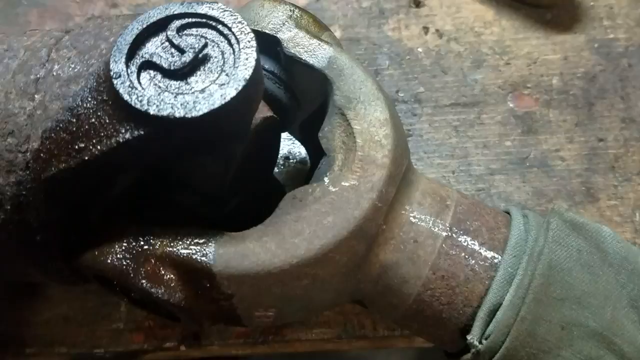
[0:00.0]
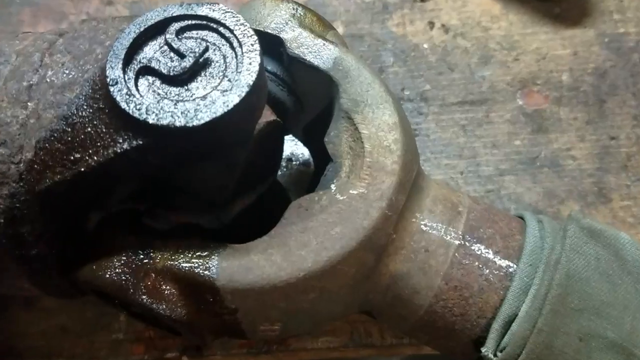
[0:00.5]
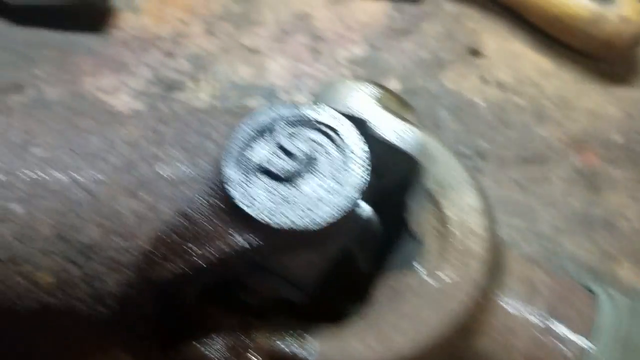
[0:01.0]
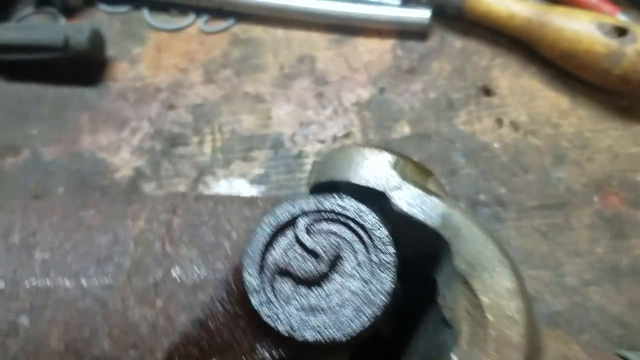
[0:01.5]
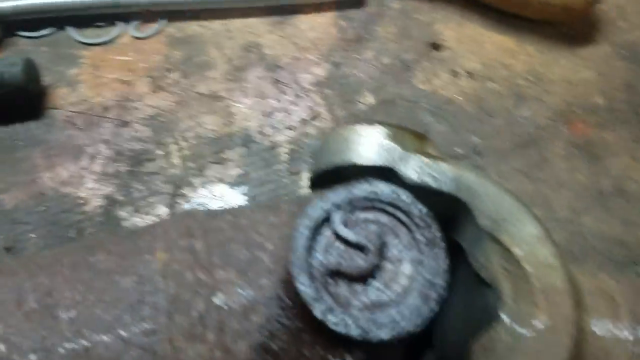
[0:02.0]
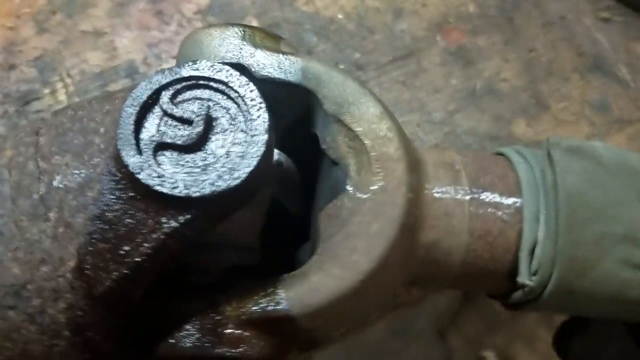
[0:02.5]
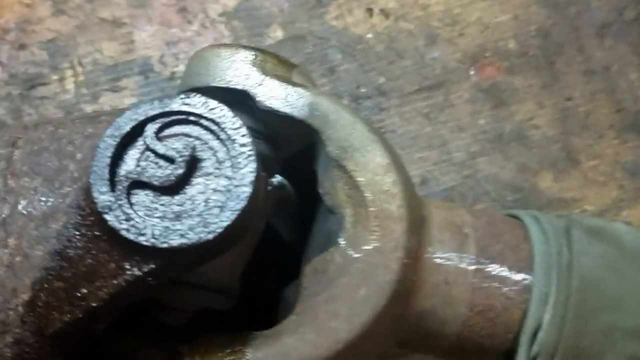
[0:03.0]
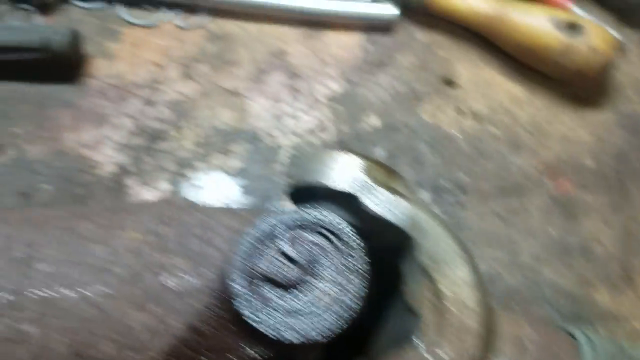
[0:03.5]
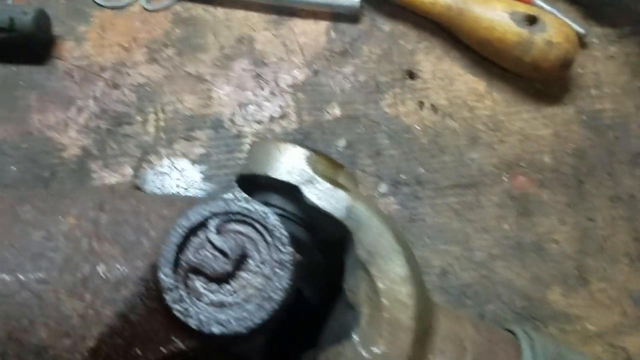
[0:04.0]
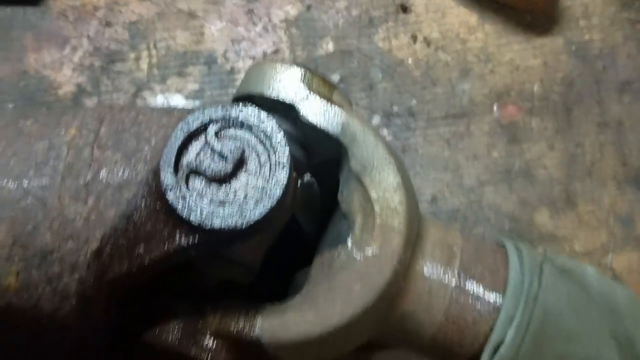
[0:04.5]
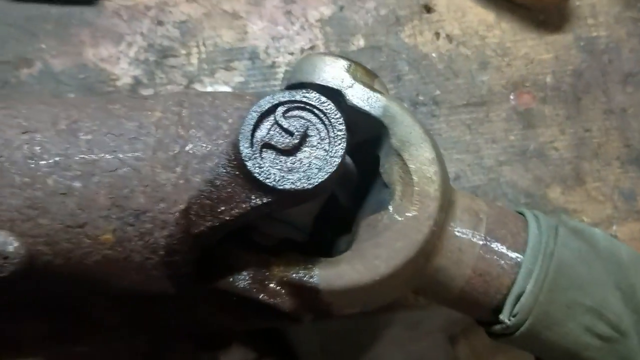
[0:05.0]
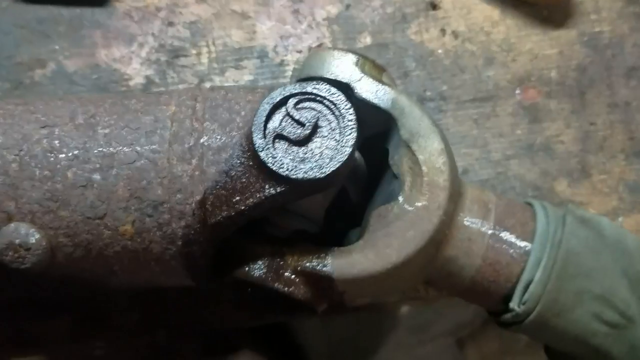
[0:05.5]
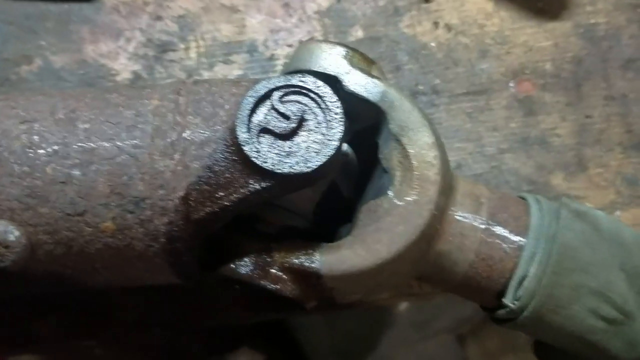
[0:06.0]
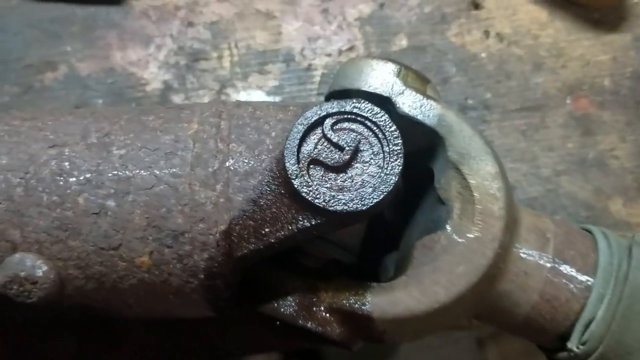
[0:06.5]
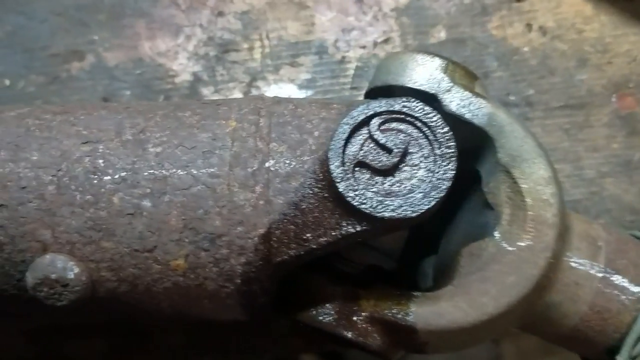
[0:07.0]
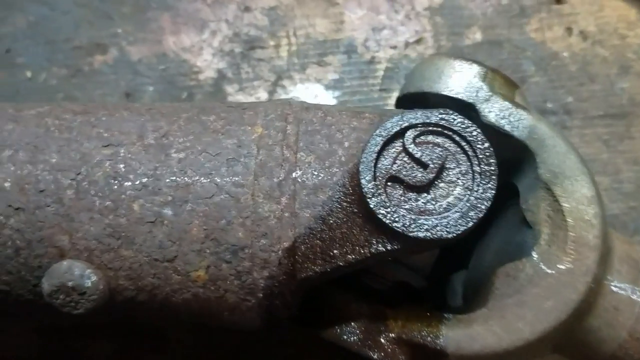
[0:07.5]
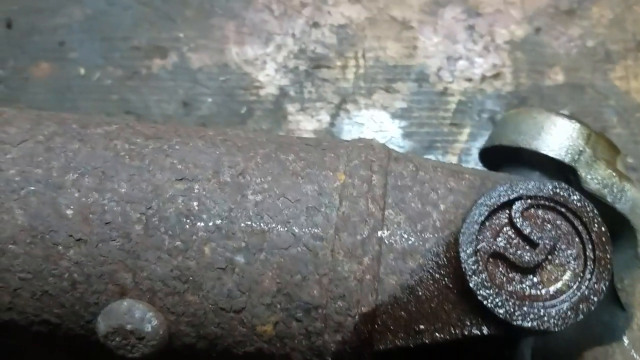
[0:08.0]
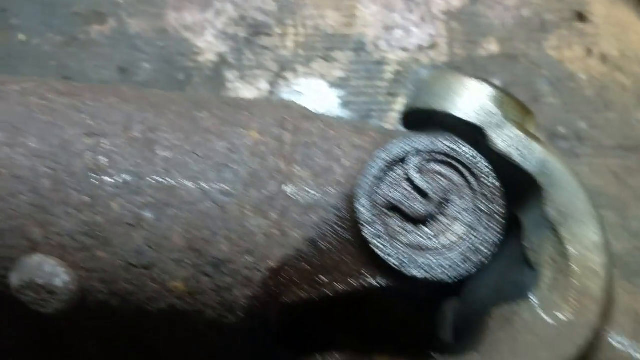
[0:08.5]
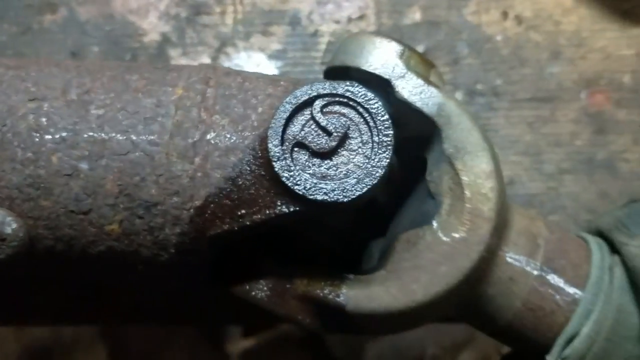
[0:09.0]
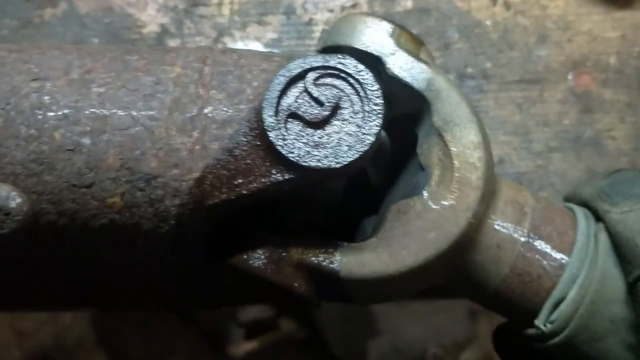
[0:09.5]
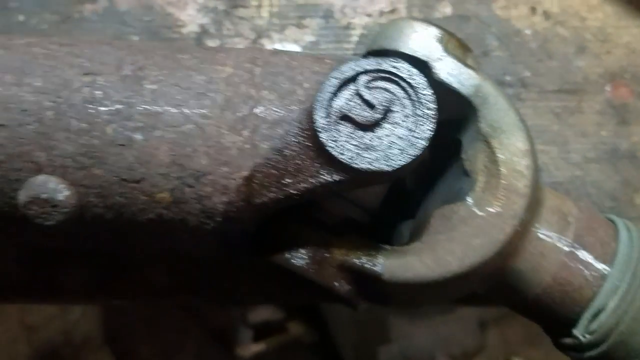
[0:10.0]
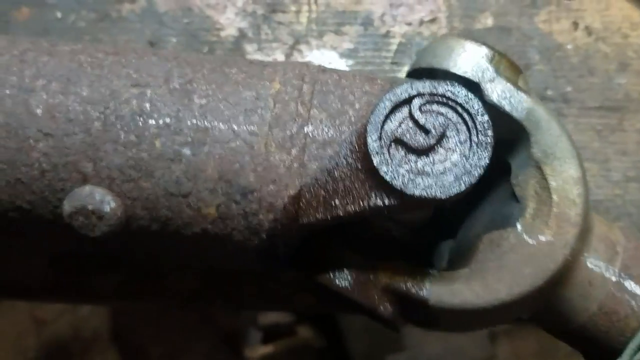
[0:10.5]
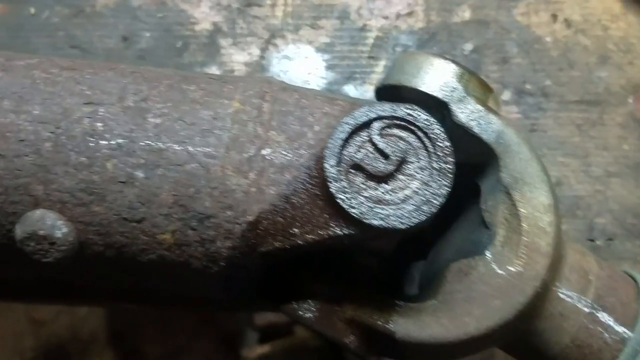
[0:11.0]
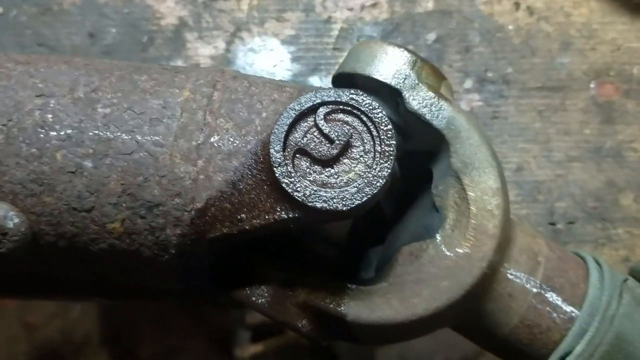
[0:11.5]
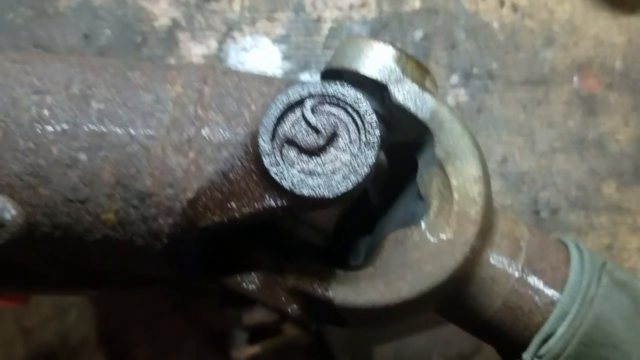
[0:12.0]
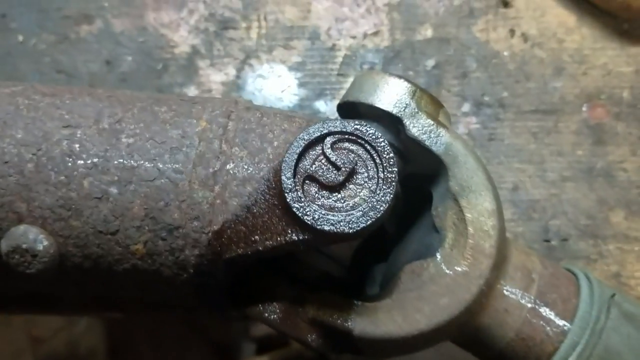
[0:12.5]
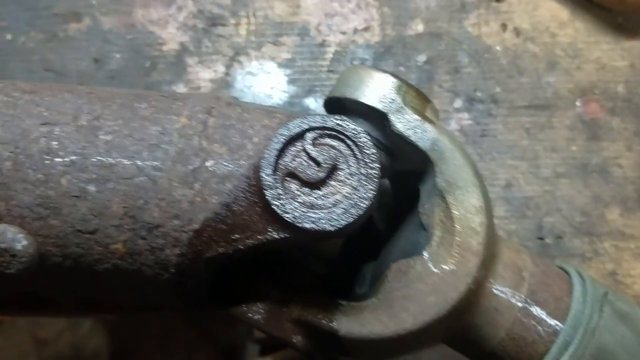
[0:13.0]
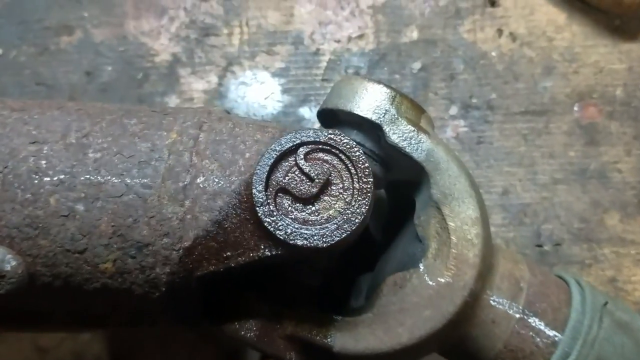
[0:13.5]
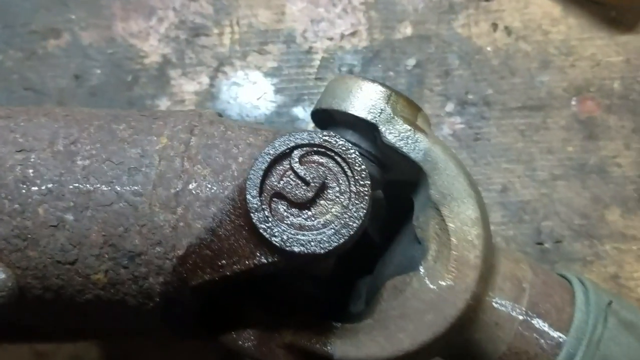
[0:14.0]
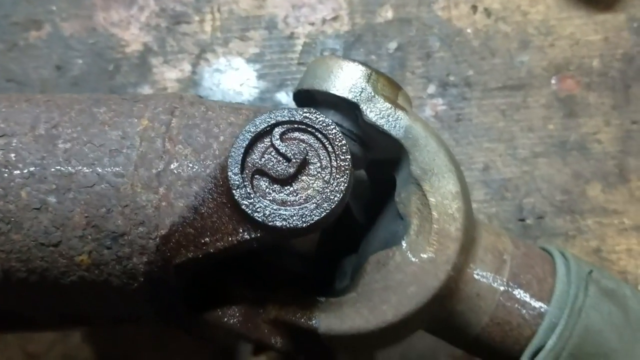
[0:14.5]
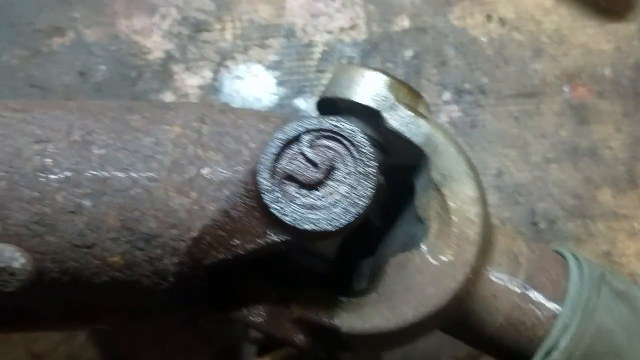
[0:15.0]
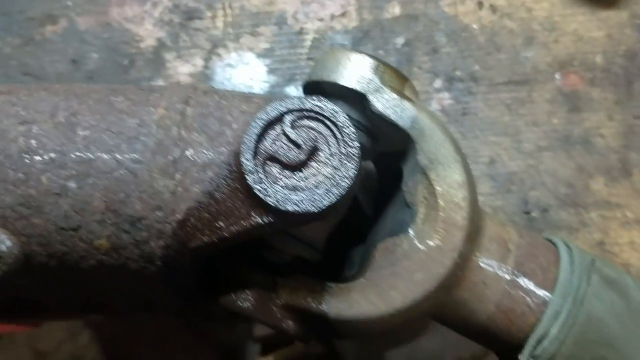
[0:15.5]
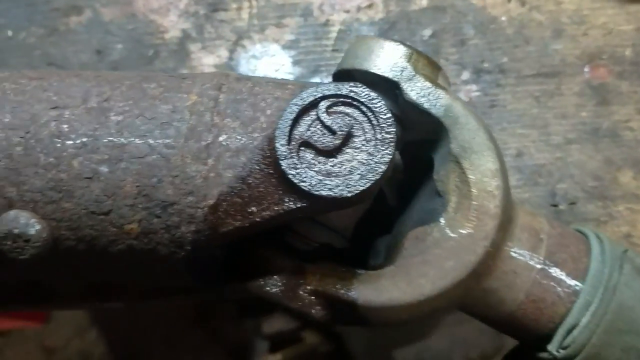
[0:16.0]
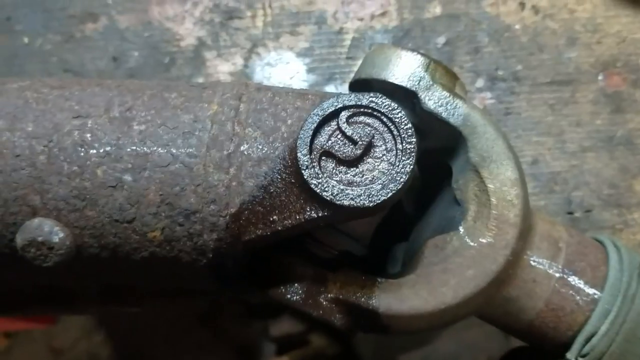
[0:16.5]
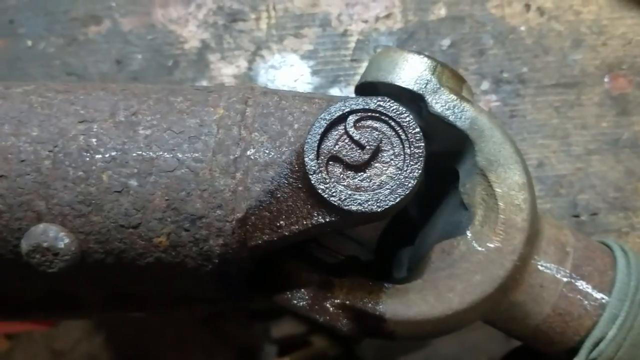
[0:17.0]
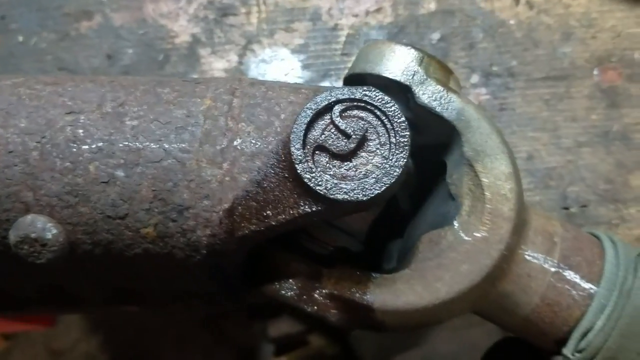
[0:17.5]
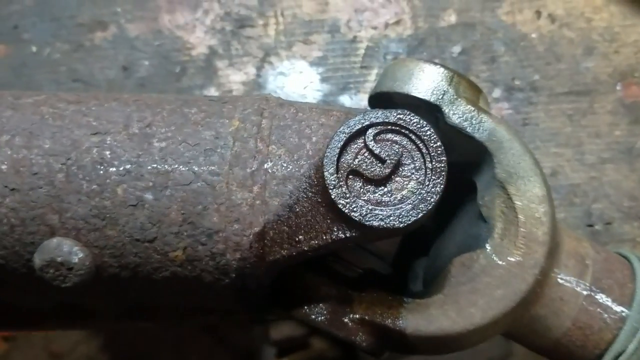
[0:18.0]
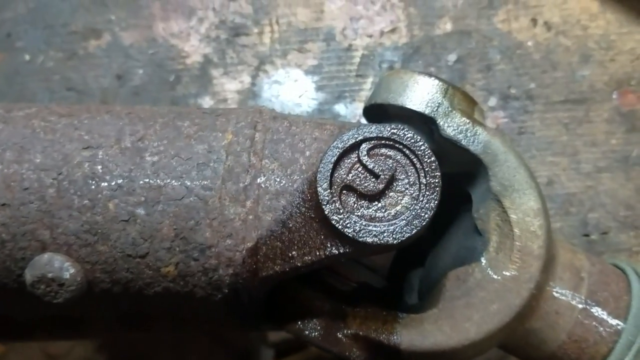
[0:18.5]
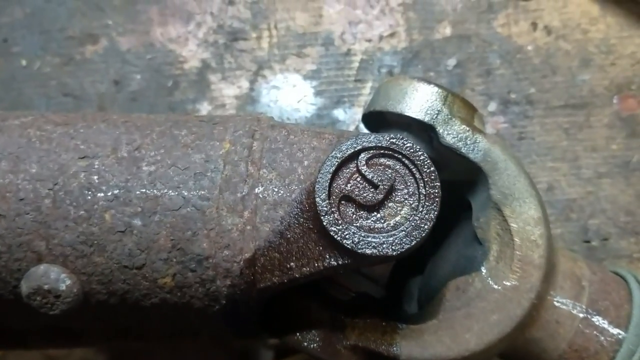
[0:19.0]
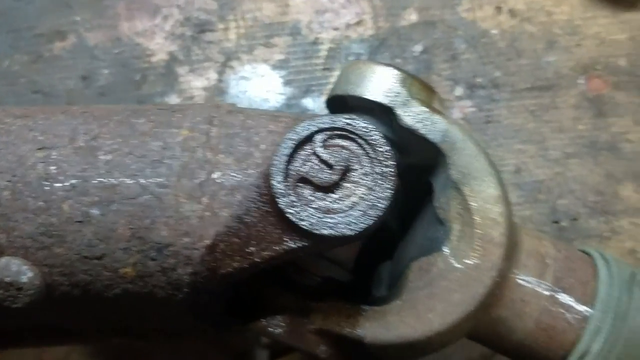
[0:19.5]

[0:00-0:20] An overhead view shows what appears to be some sort of metal fixture or pipe; it looks like some sort of drive shaft or metal structure intended to turn. The camera pans back and forth from left to right randomly. On the right side of the screen a right hand appears holding the device or a piece, and then the hand disappears. The focus is on the center section of the pipe, which is rusted, and there appears to be some oil placed there, as there are wet spots on this section. The camera continues to pan back and forth from left to right and up and down while keeping the focus on this area of the metal pipe. On the left side there appears to be a mint green cloth wrapped around the right end of the item.